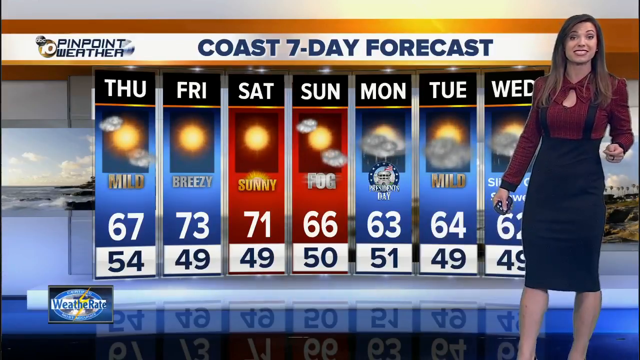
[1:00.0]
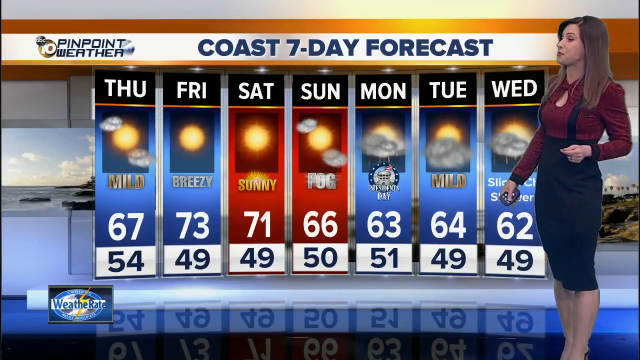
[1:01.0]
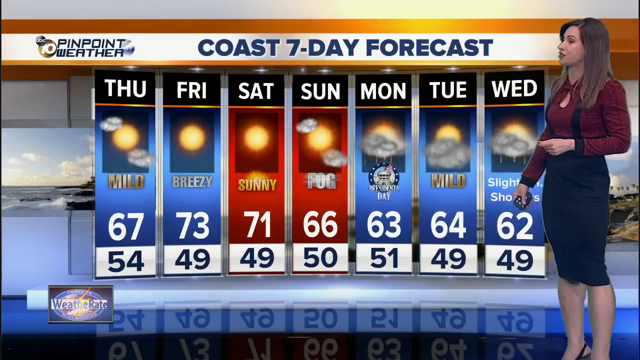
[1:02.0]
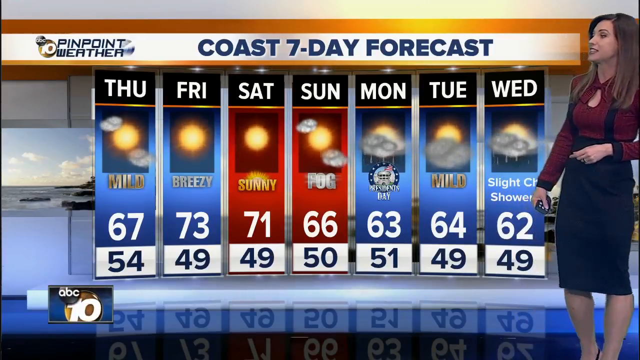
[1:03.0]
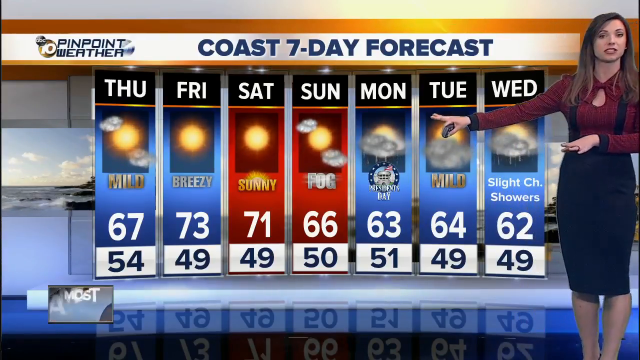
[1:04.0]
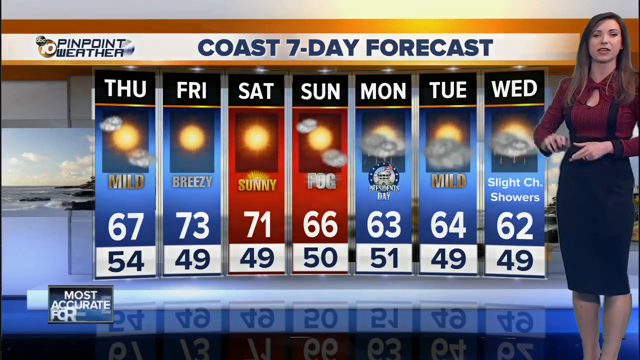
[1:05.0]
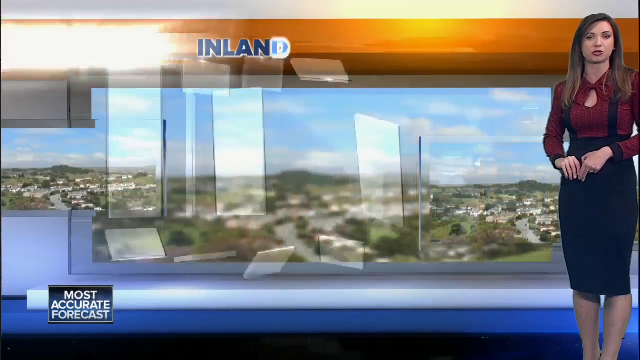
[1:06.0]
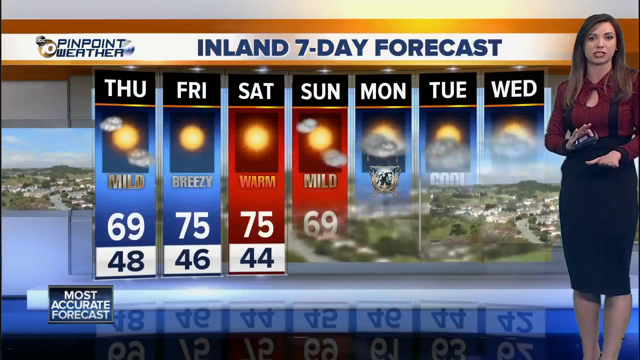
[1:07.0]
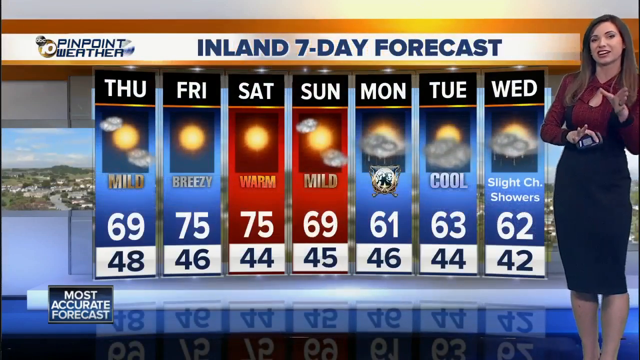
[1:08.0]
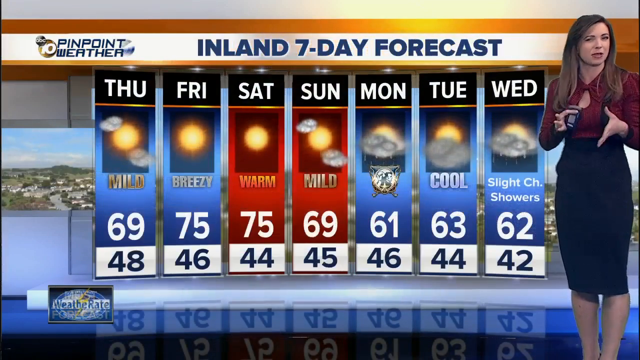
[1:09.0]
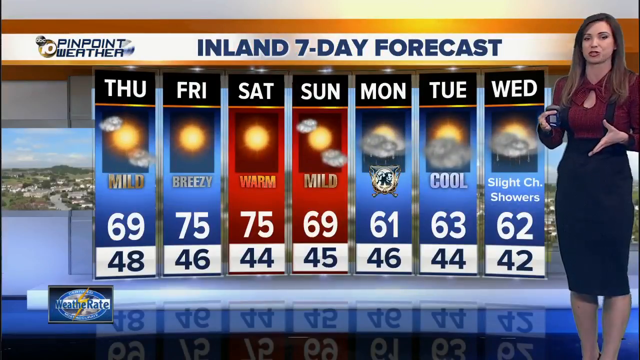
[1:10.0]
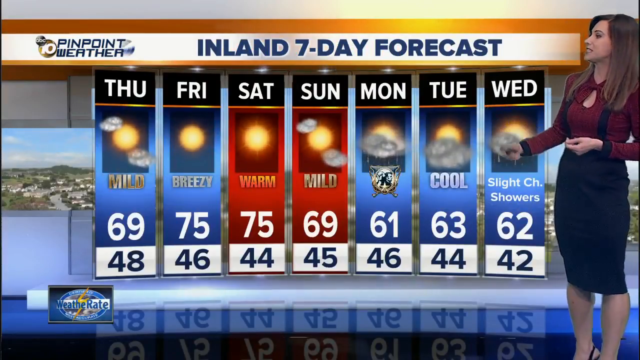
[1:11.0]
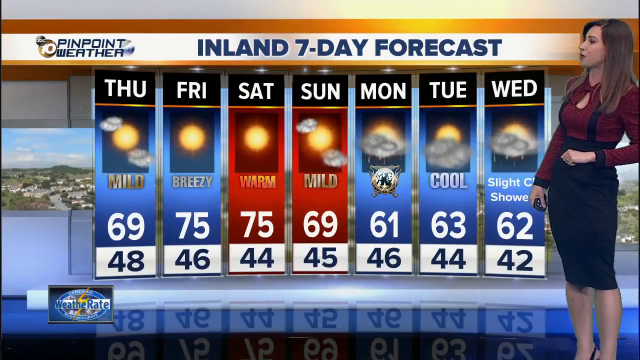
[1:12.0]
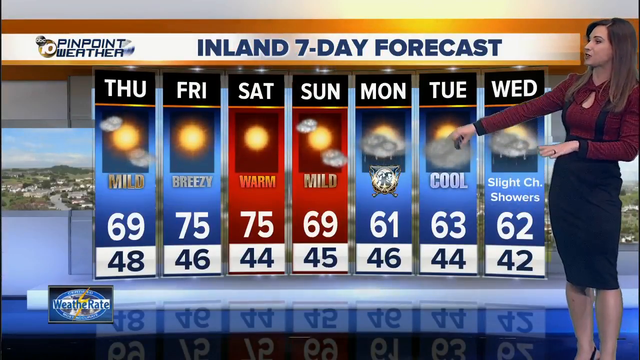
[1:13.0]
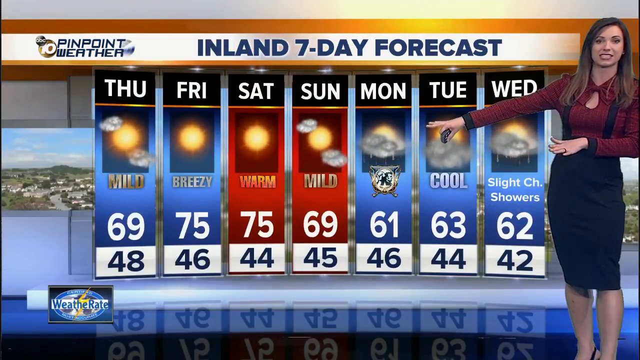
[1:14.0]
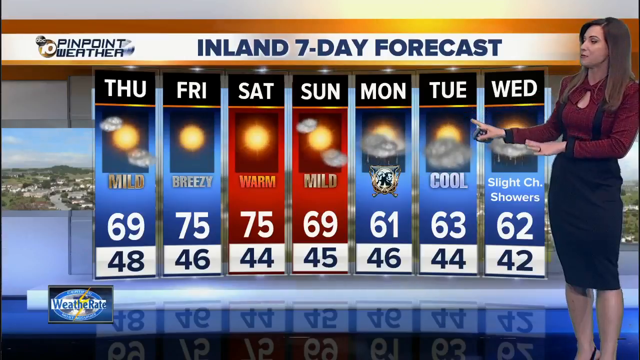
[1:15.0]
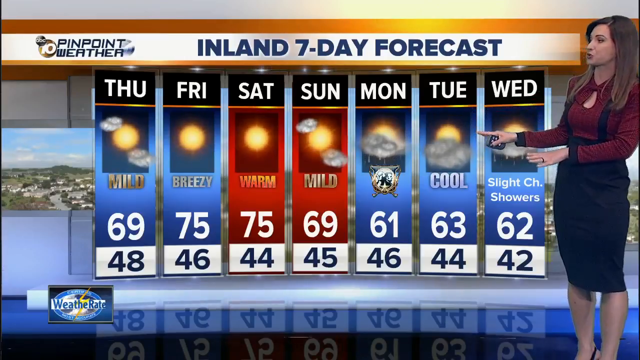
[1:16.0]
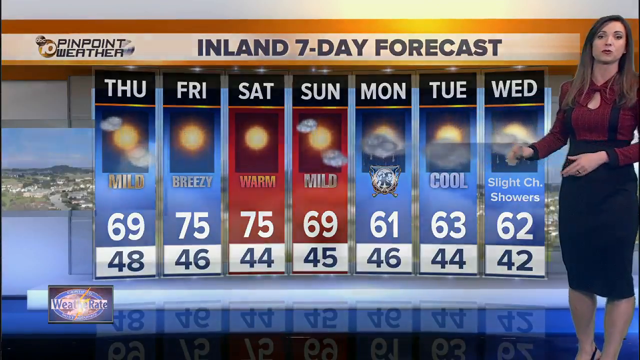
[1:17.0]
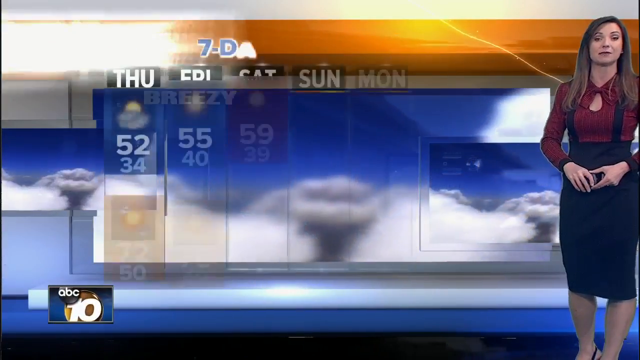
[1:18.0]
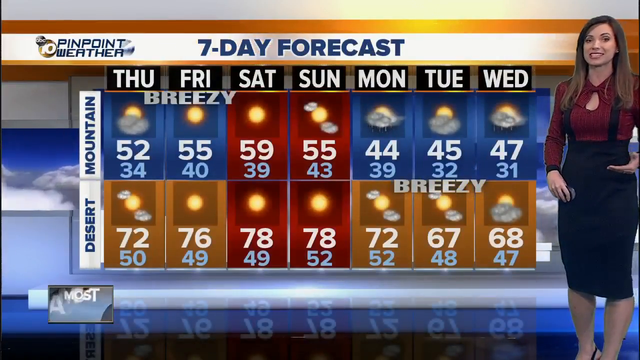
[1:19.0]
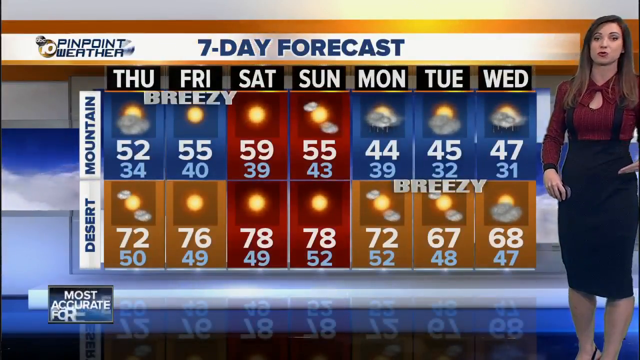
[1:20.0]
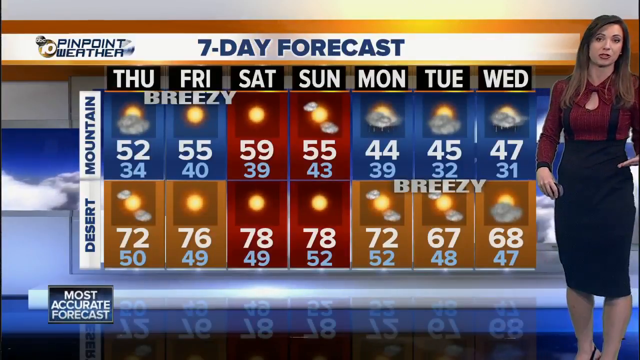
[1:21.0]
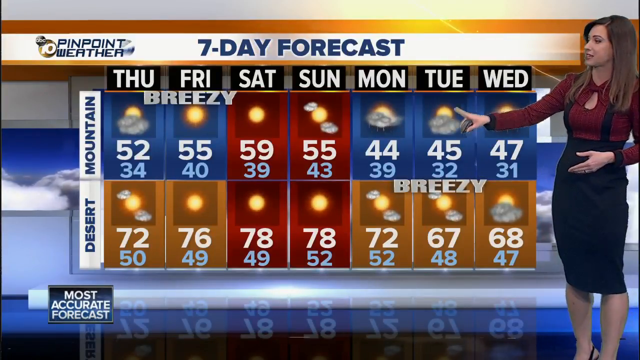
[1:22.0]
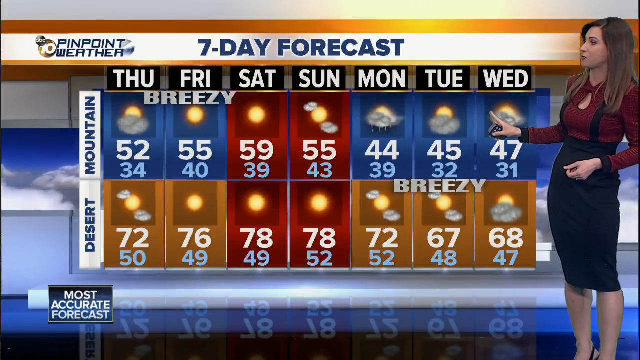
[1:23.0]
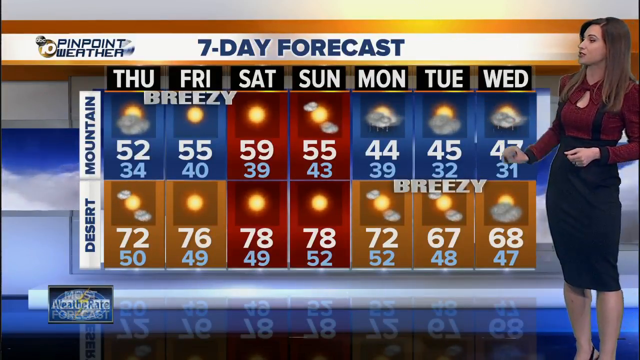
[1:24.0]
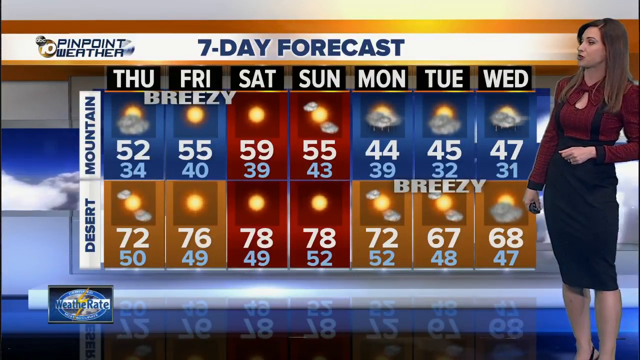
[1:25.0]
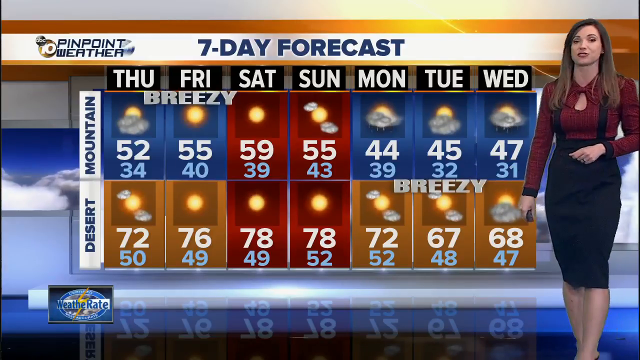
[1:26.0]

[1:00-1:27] The same presenter, in the same studio but with a different background, presents a seven-day forecast. Thursday begins at 69 degrees Celsius, followed by Friday, Saturday and Sunday, going up to Tuesday. The information is shown in blue with sunny insets, and on the lower part is a yellow element, with red in part of the vertical lines. She continues to gesture and talk about the weather. On the far left, text reading "desert into mountain" is written in blue on a white background. The frame then shifts to show cooler blue tones for the mountains and brighter orange for the desert.